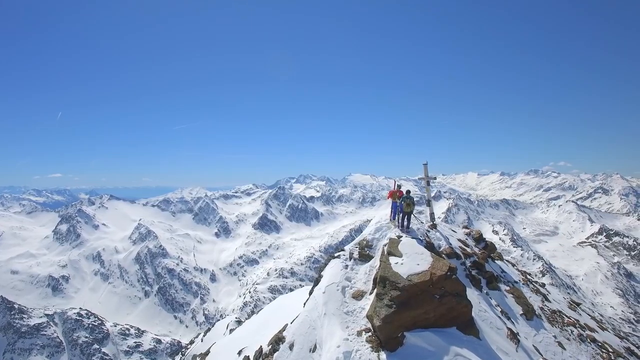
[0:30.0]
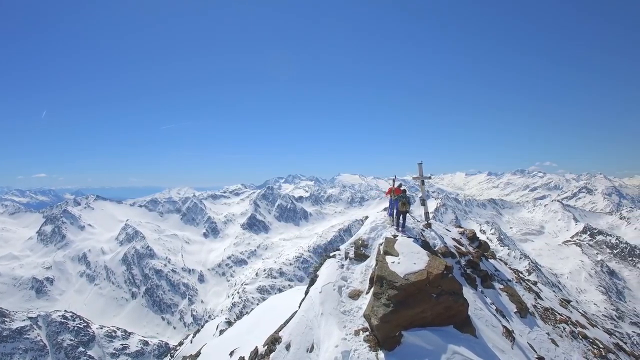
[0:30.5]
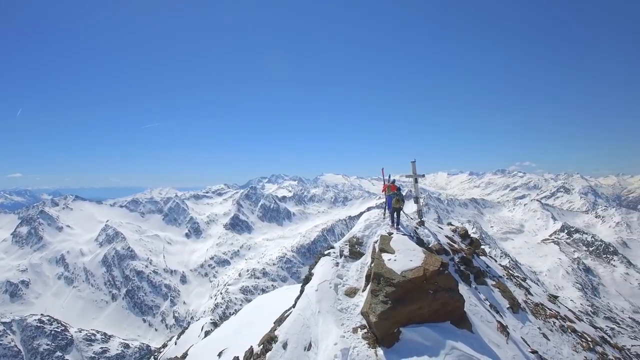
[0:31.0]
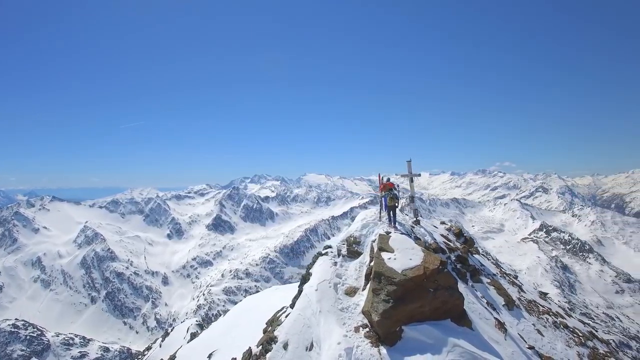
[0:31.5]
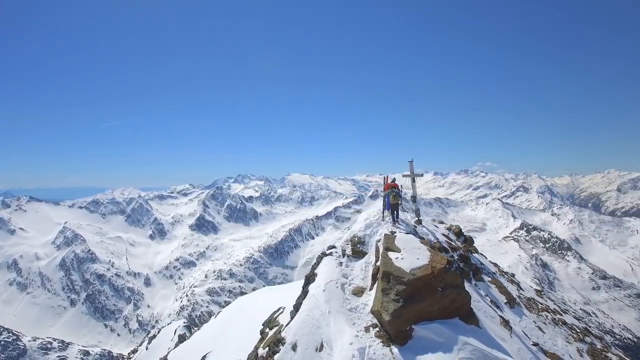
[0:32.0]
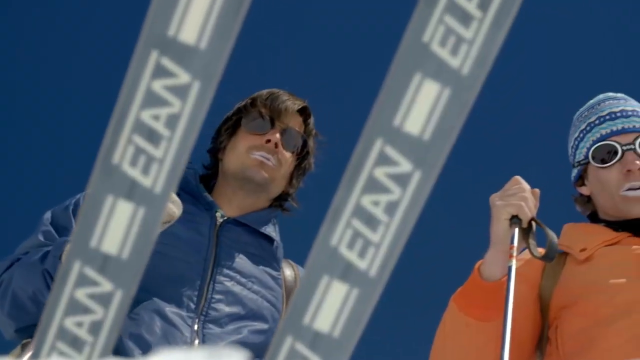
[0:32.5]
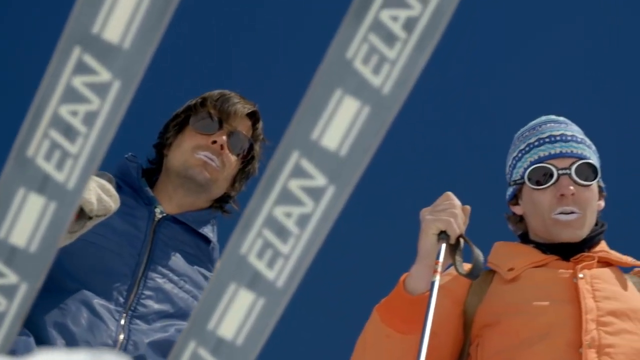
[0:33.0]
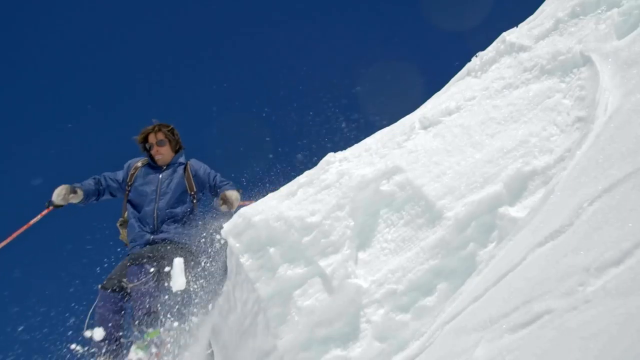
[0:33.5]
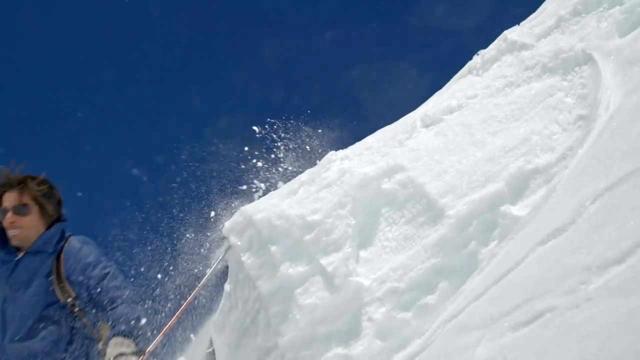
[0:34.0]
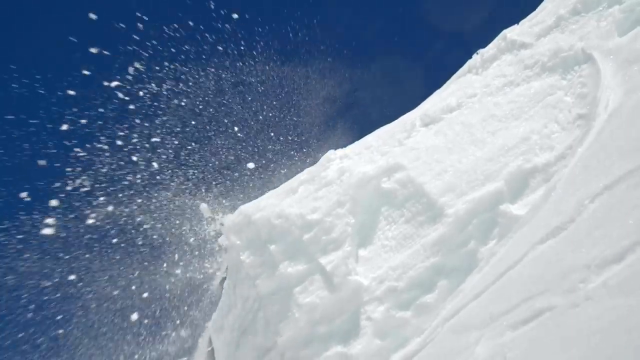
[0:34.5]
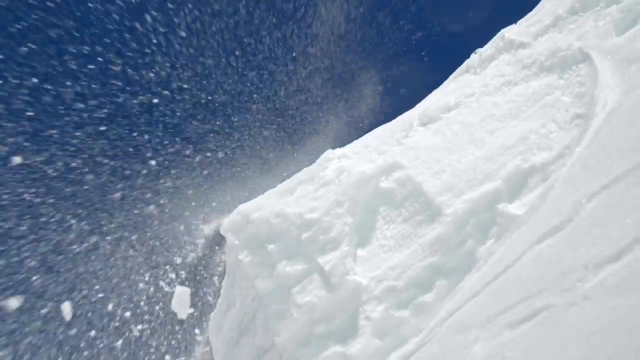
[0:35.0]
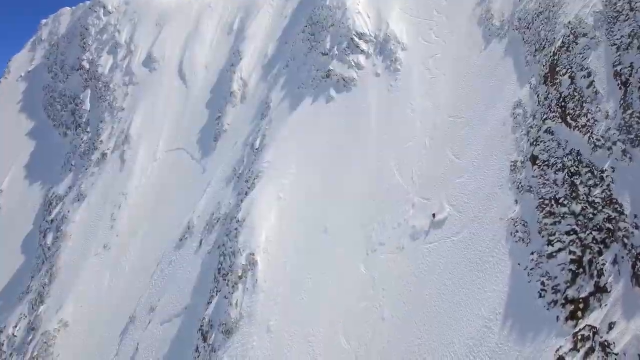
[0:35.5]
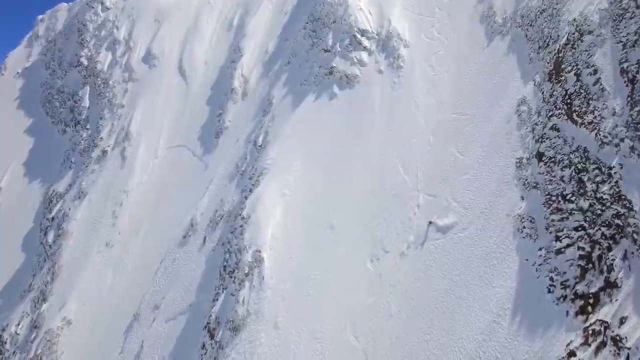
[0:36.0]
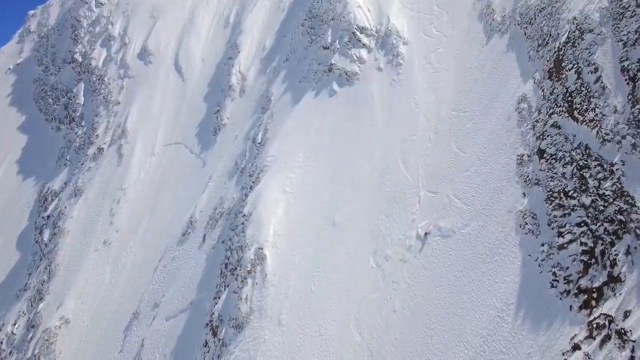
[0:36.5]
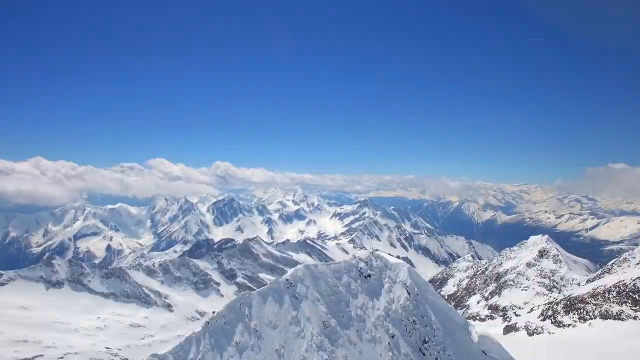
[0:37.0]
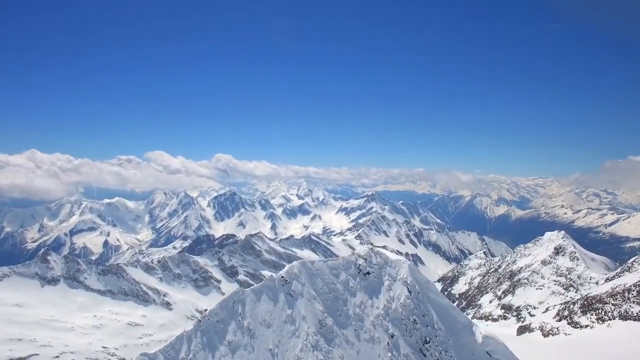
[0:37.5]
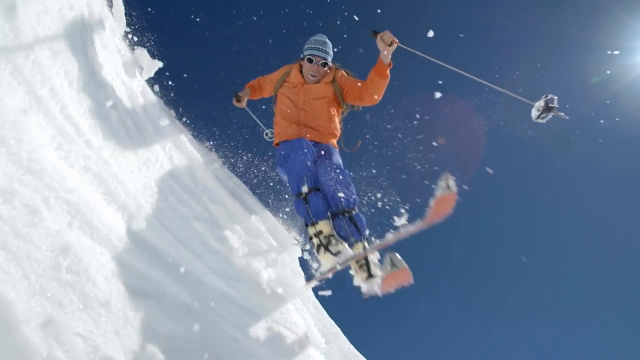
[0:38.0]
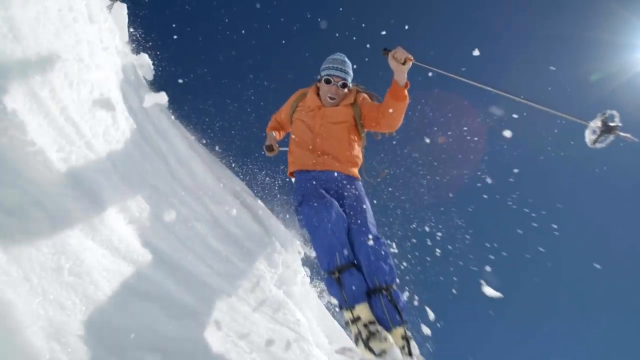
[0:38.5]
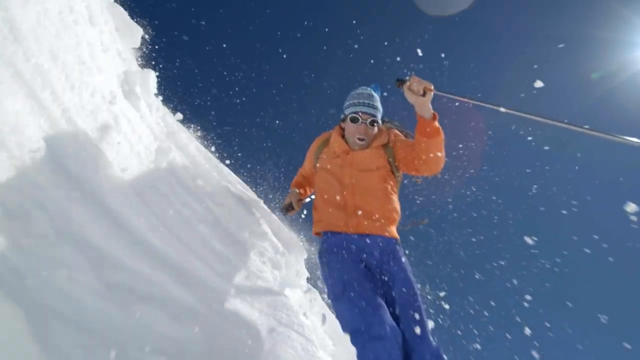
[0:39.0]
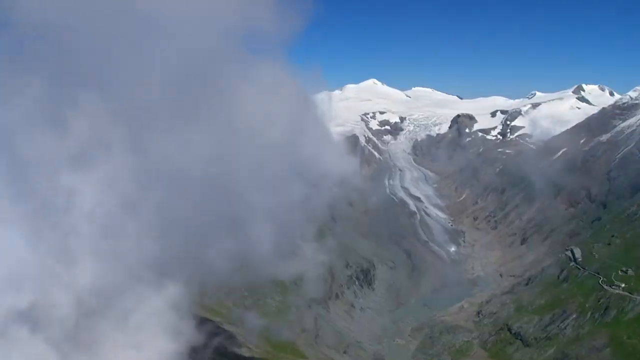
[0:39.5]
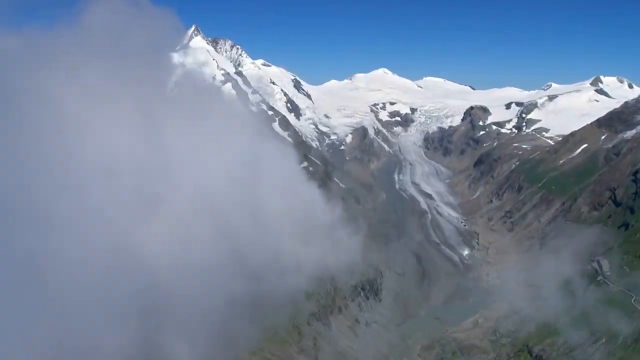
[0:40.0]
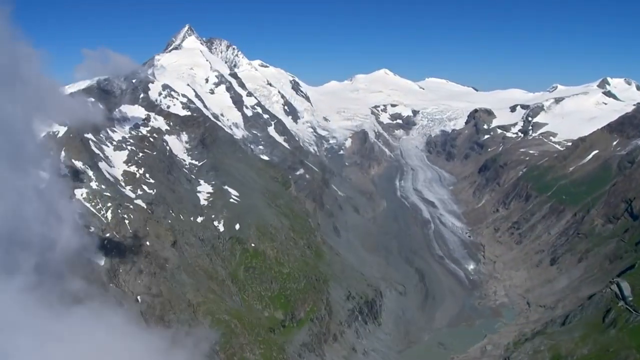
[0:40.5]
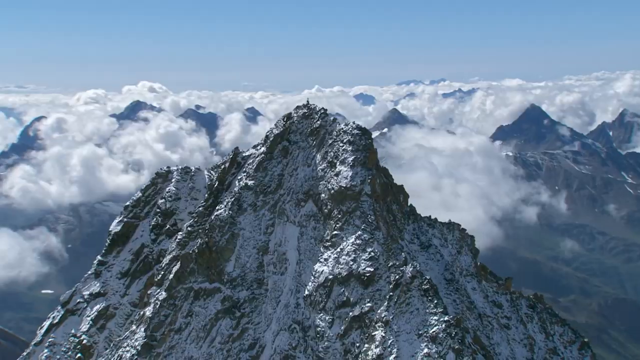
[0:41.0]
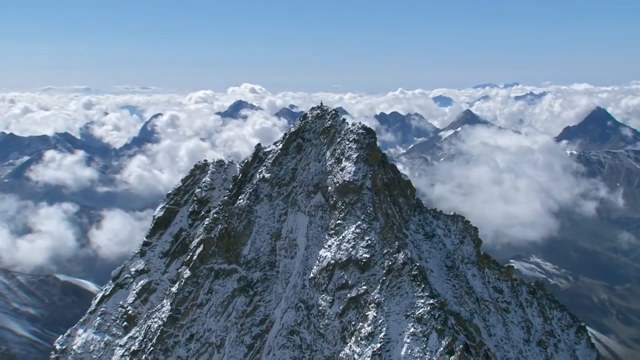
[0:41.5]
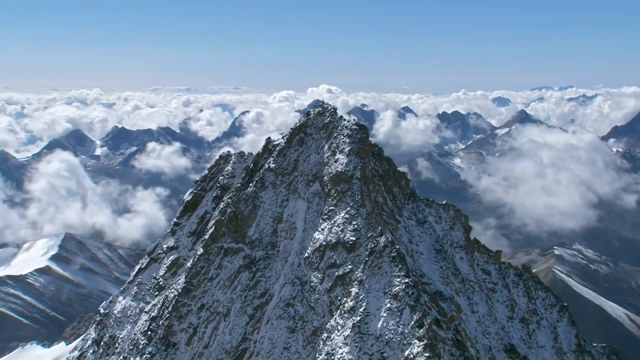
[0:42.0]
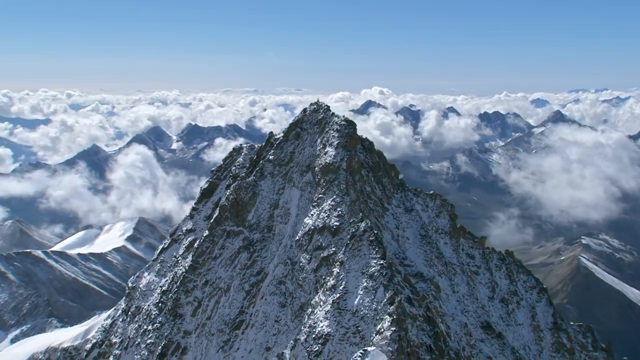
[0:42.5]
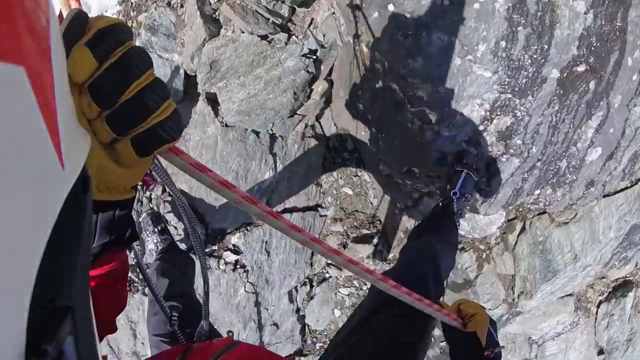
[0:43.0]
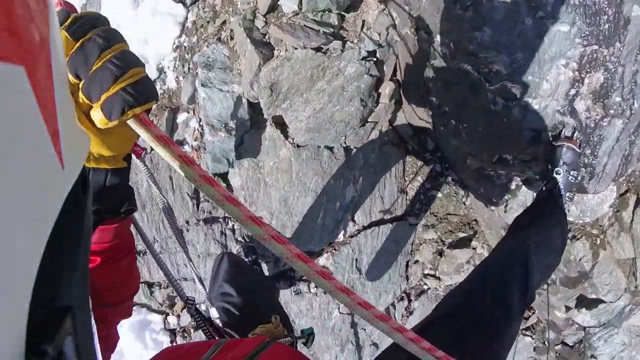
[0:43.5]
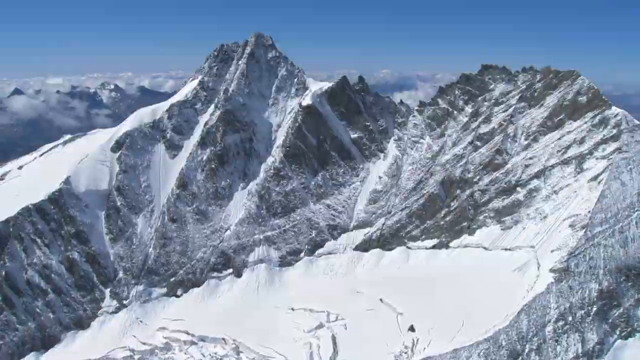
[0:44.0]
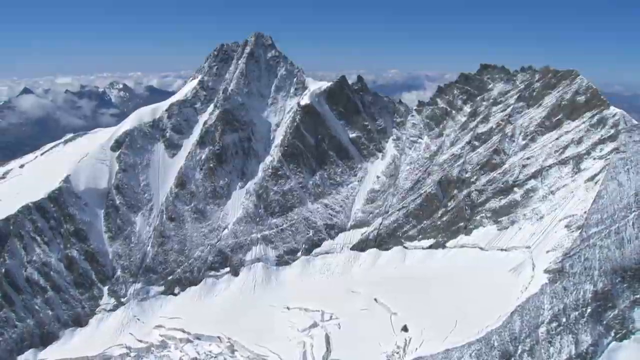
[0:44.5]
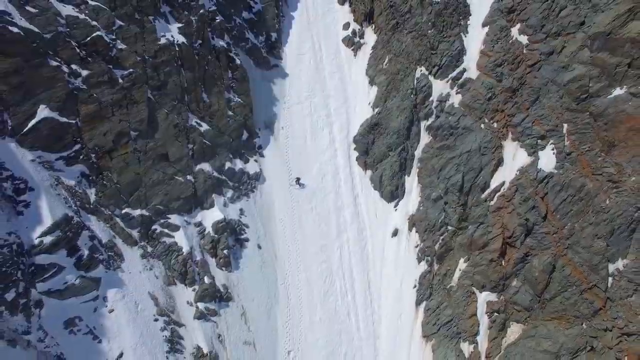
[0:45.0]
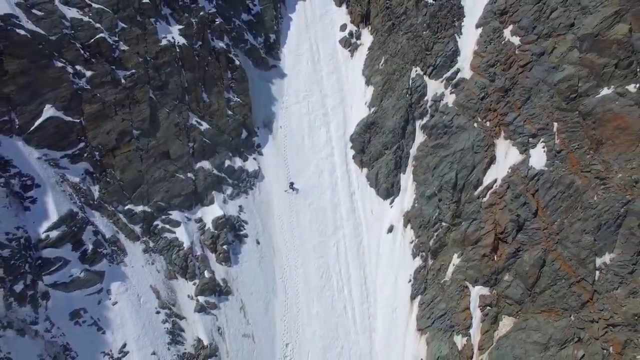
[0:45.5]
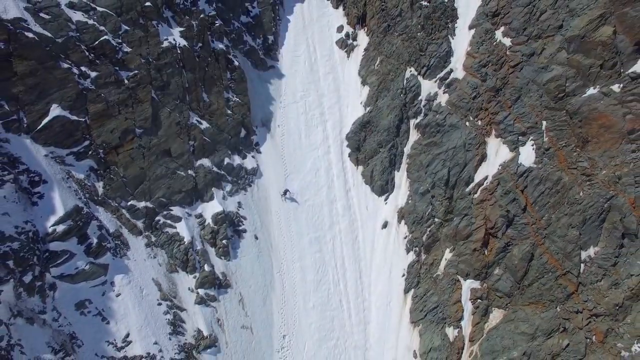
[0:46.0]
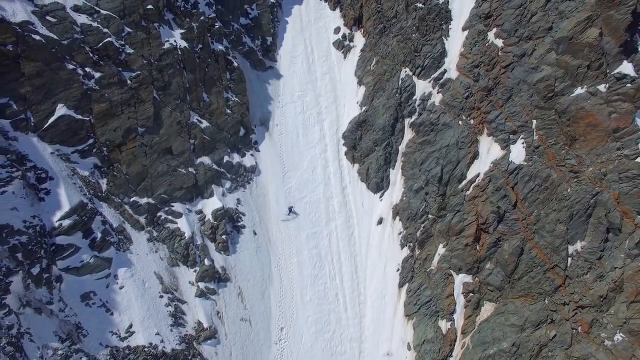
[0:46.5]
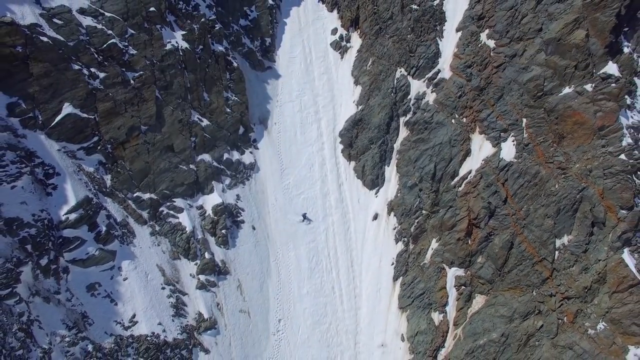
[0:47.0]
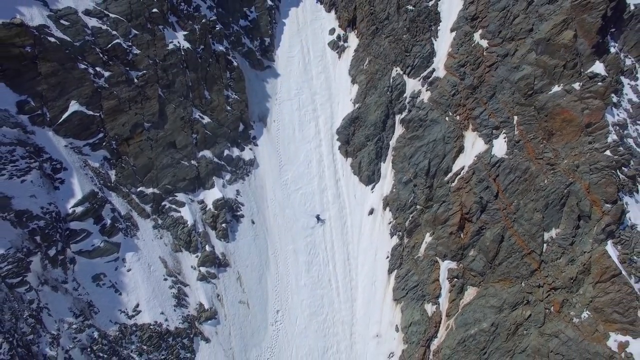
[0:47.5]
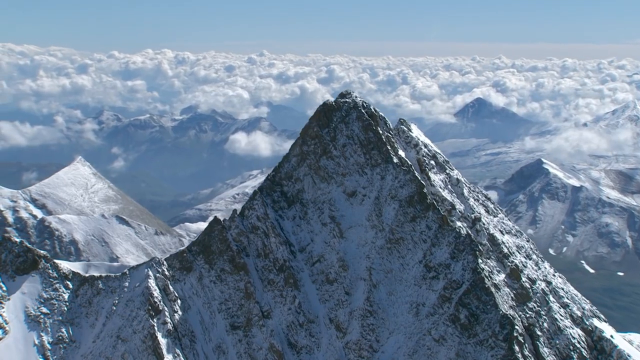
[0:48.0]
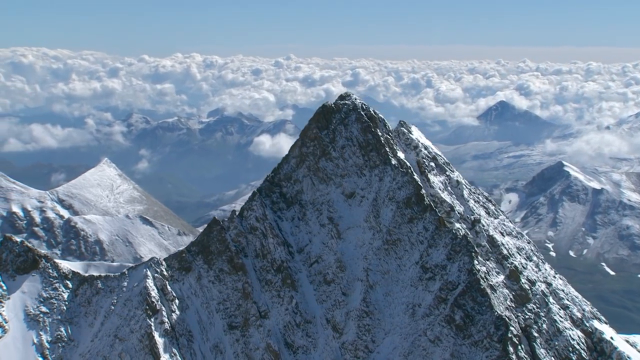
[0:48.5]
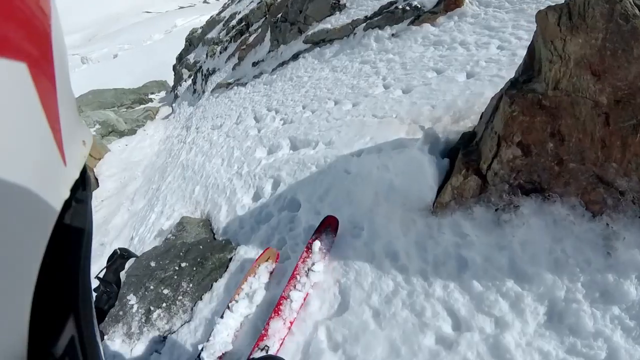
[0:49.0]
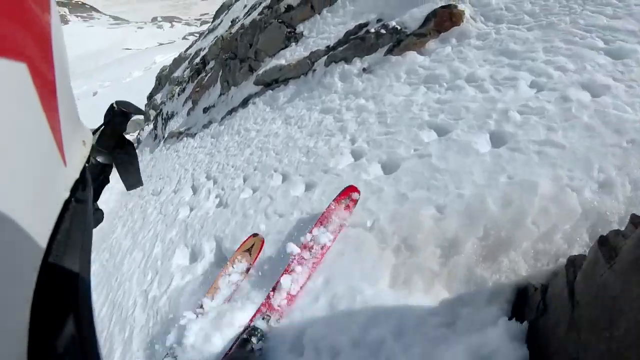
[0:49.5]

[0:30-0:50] The men carry ice skating equipment. A man in a blue jacket skates down the ice. The camera then views the mountain from high above the ground as another man follows. The mountain is covered in white, with some patches of green. The camera views the scene slowly from high up in the sky. One of the men seems to turn around. One of the skaters wears a pair of pants, an orange jacket and a beanie.